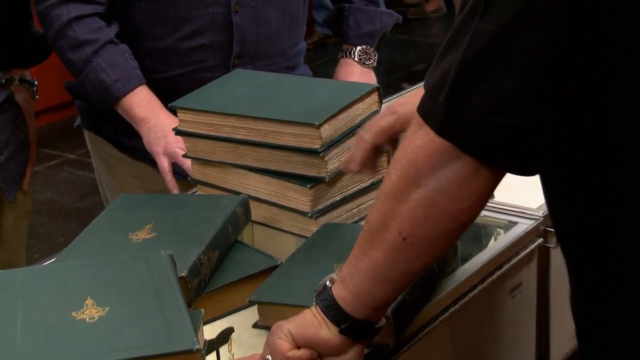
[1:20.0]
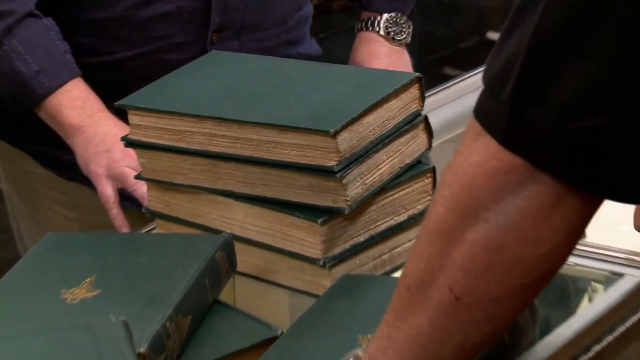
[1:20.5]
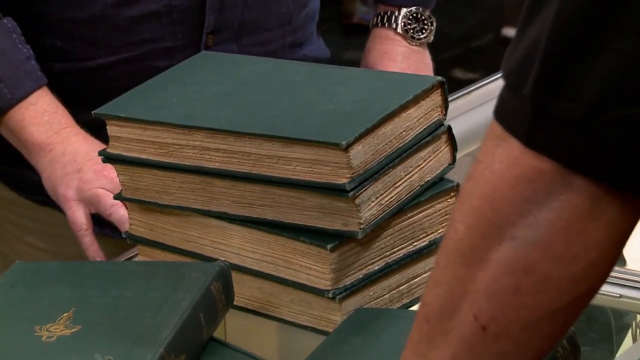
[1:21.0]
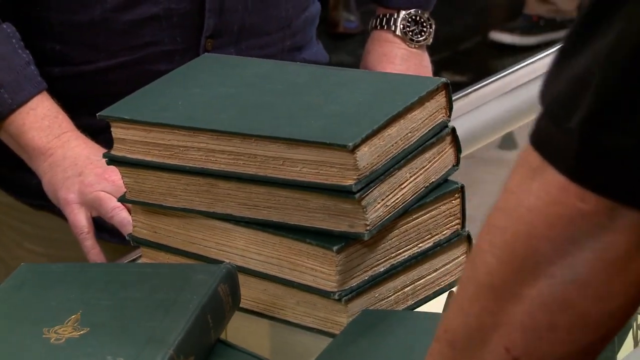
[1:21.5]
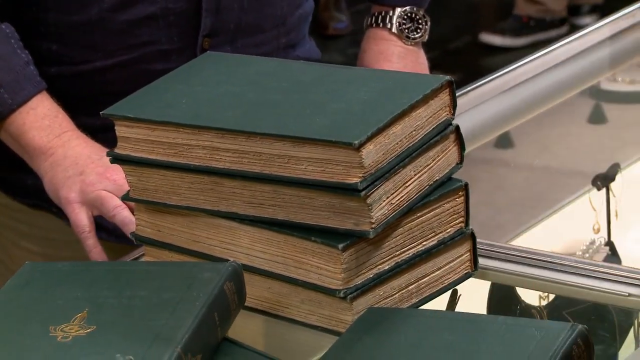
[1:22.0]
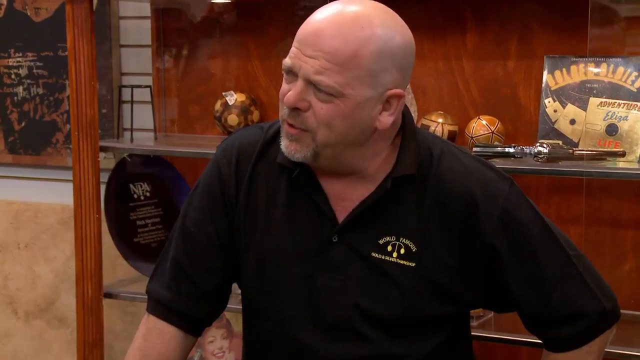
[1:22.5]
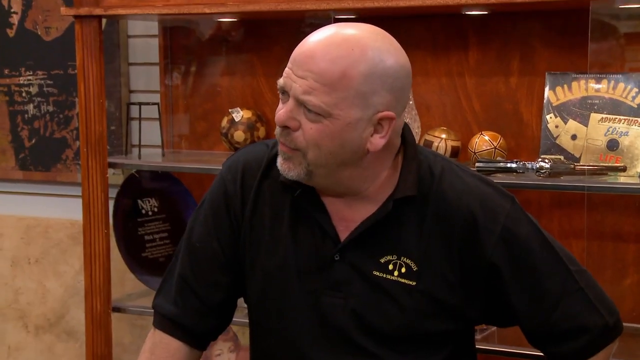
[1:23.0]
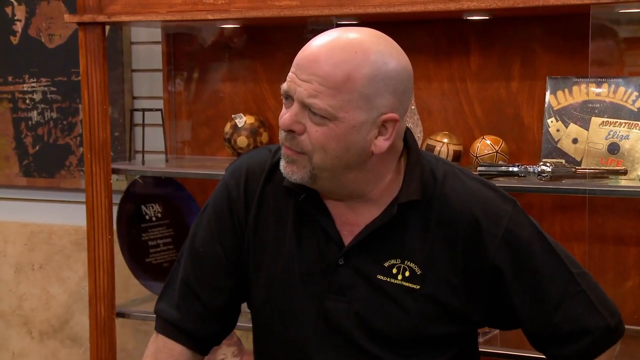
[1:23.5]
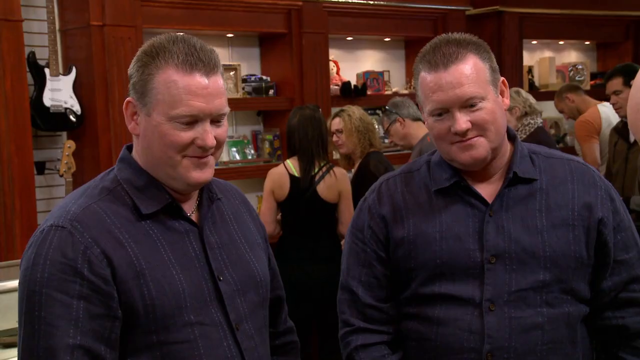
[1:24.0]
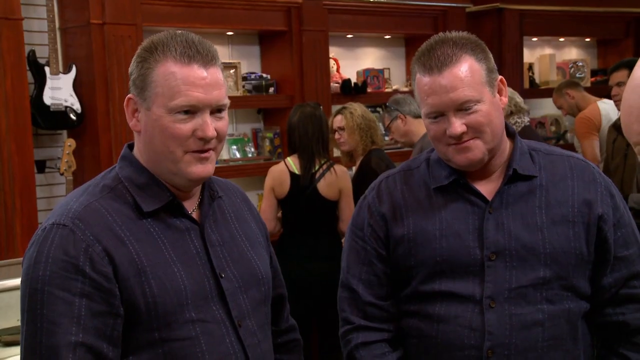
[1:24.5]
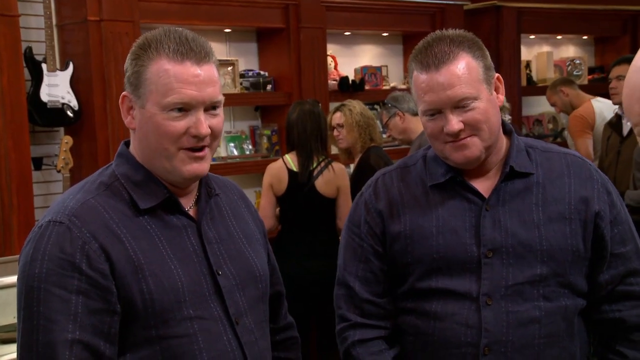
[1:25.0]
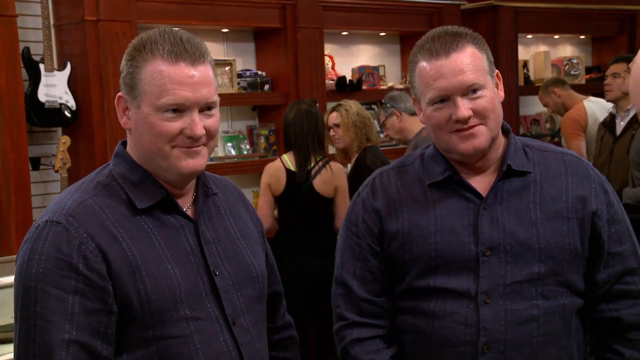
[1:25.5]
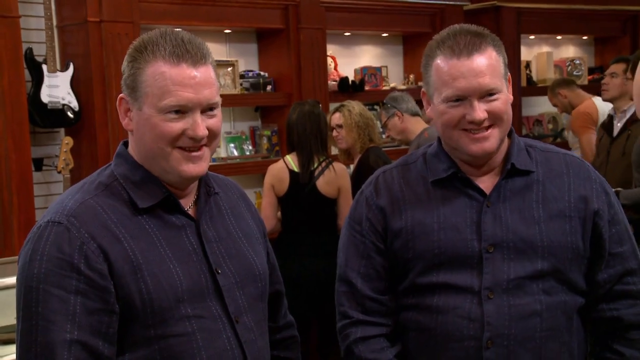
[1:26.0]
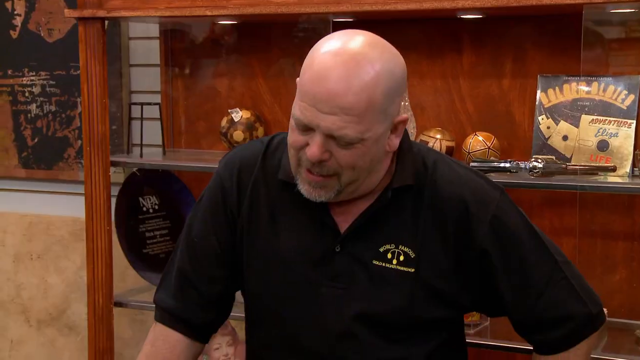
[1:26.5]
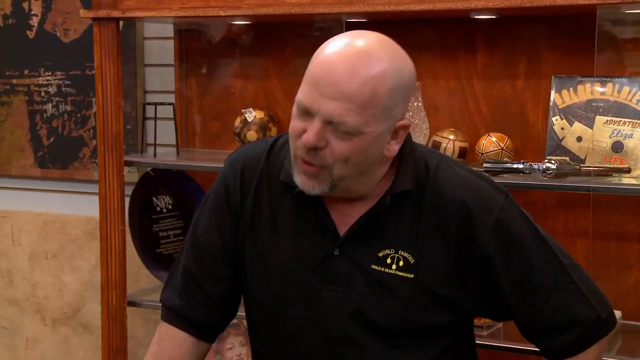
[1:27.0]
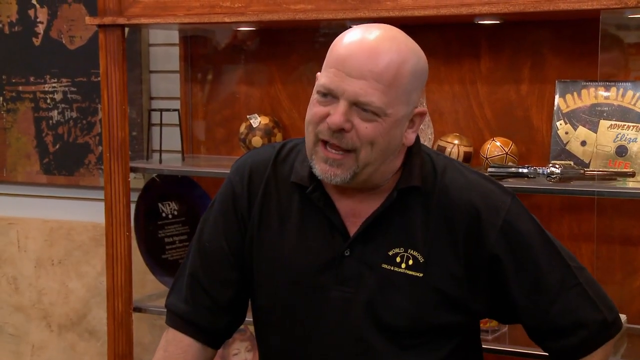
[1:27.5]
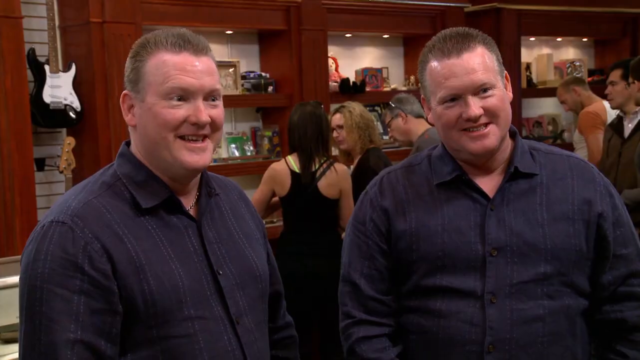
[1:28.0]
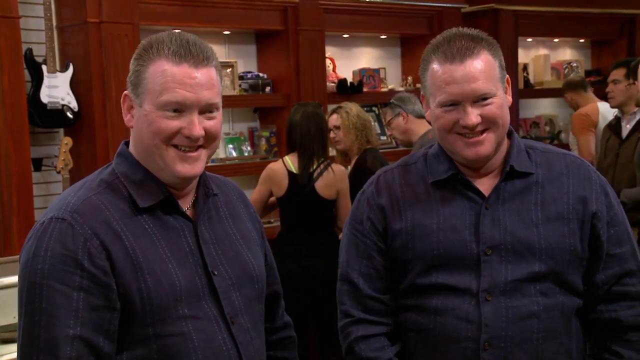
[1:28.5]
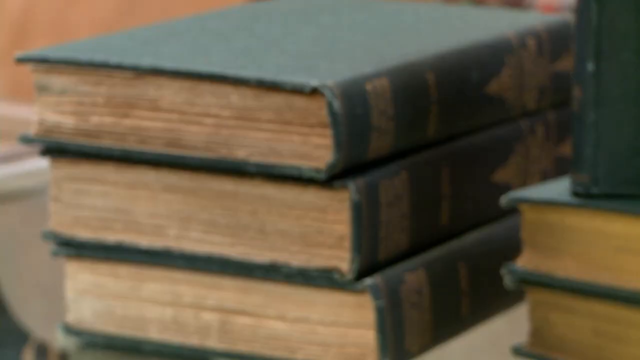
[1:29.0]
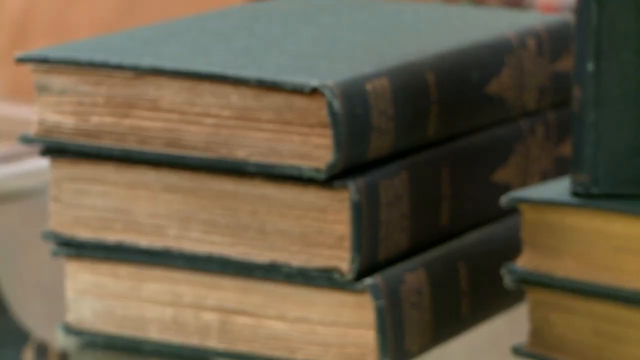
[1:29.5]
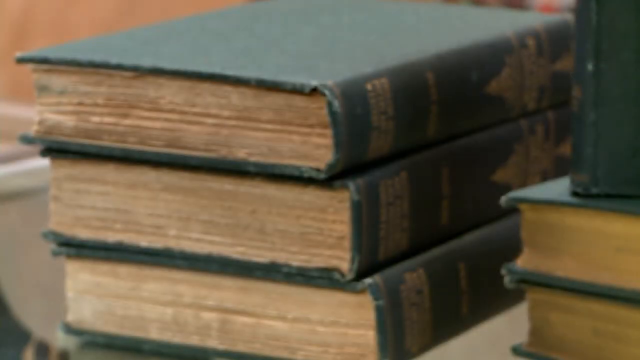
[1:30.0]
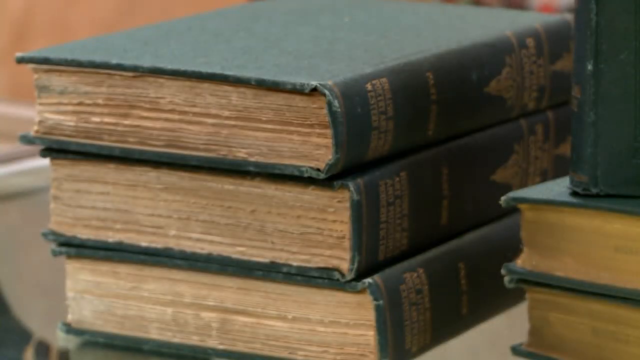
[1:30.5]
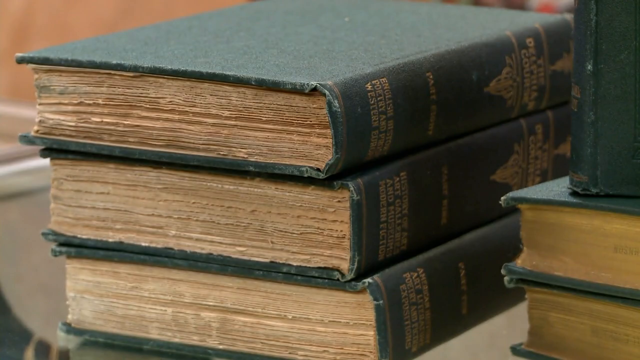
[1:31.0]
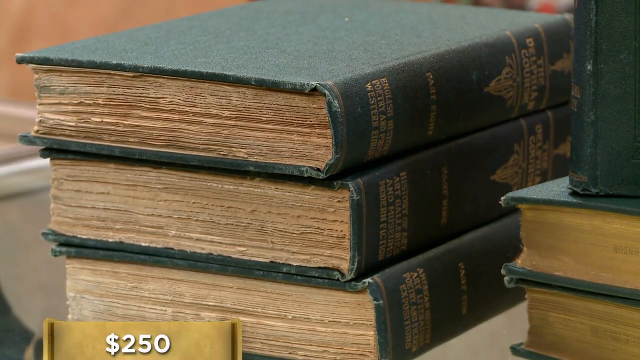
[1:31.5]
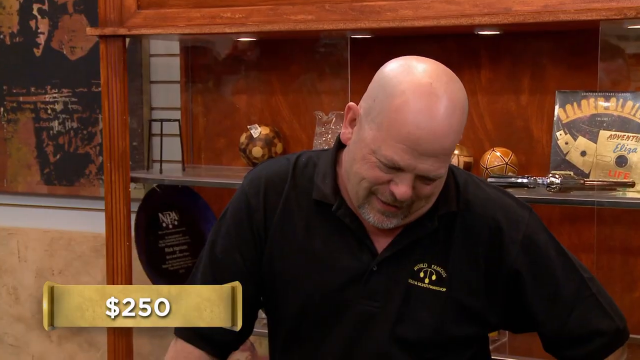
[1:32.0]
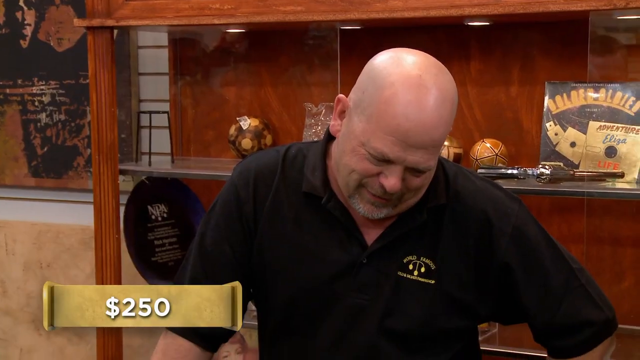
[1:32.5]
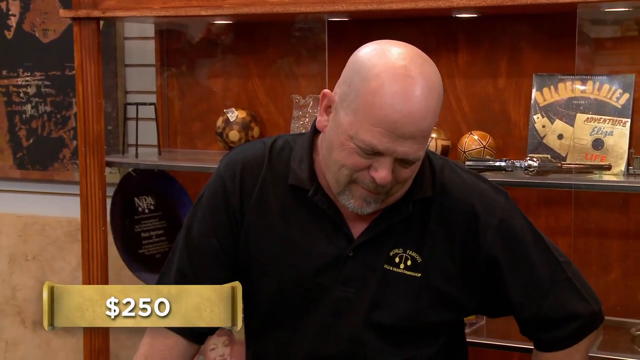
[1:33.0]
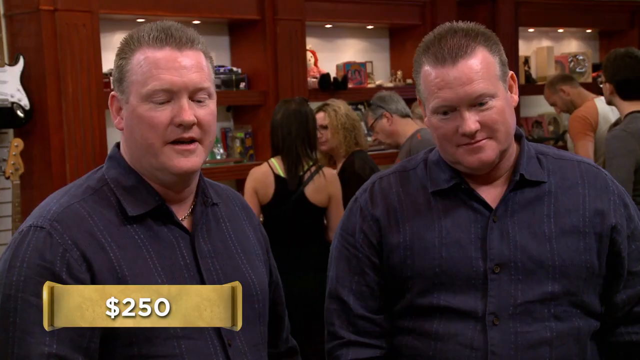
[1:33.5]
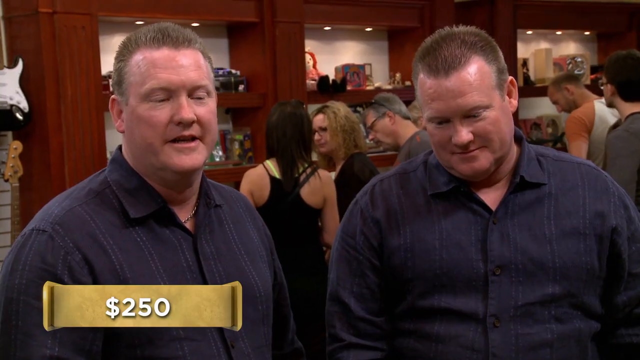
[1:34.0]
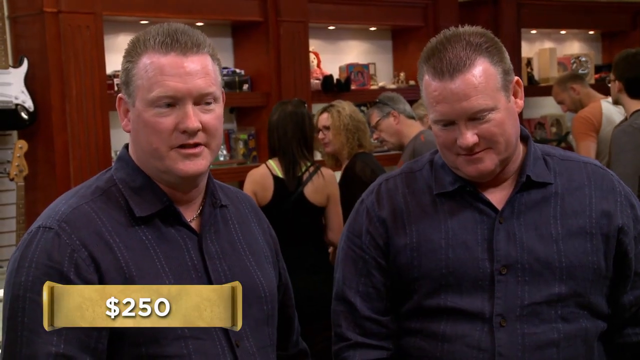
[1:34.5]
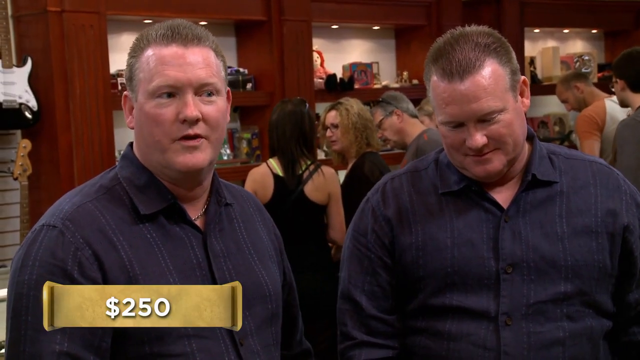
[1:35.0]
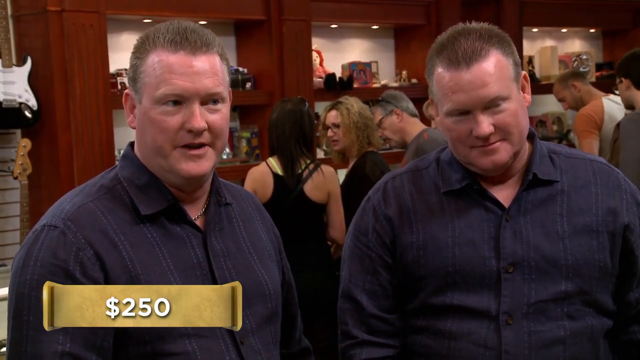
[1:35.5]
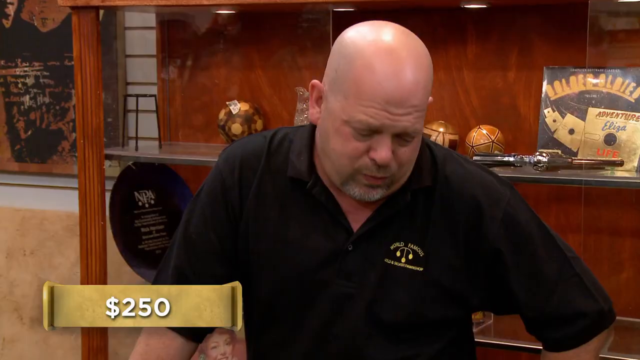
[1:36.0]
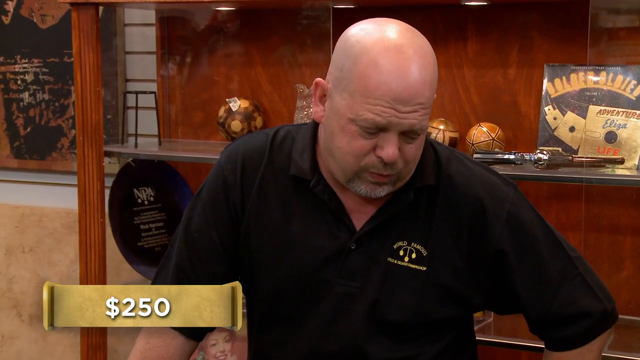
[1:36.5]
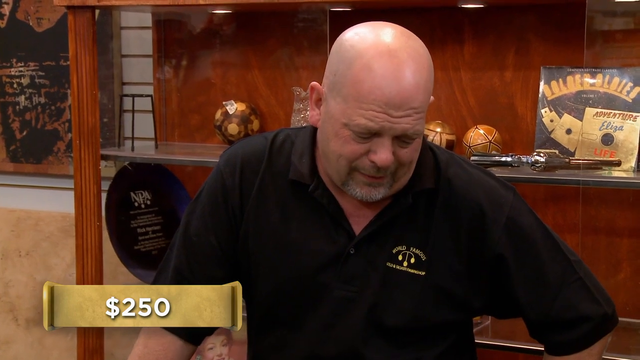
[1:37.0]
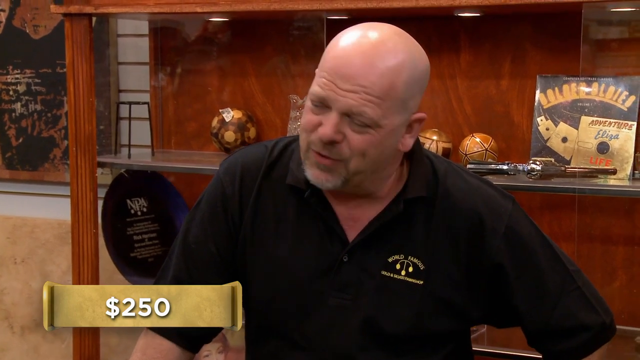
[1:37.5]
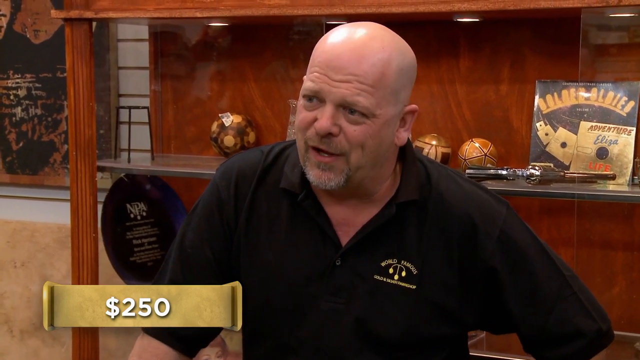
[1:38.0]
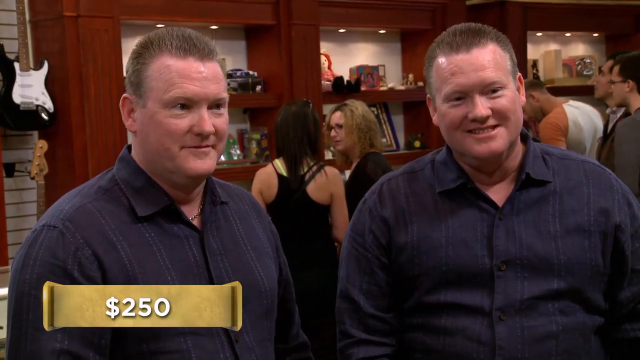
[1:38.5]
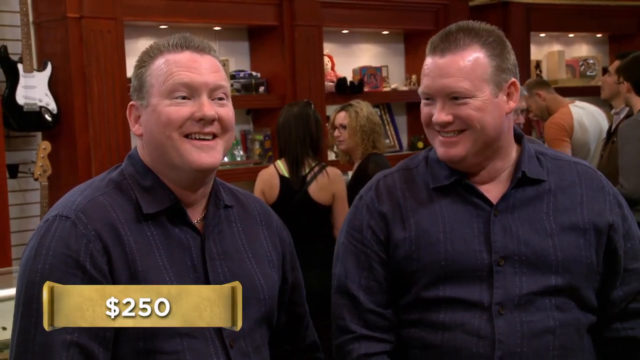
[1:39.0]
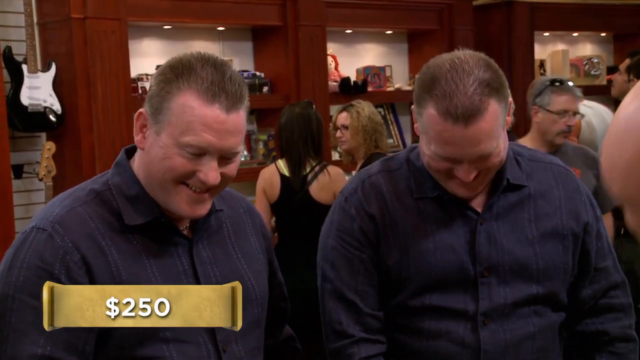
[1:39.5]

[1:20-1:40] Close-ups show the books on the counter as the bald man in the short black shirt keeps talking about them to Derek and Eric, who keep laughing. Many people behind them are looking at them, not at the camera. A big black and white guitar hangs on one of the walls, with another guitar below it, so it is apparently an antique shop. Another close-up shows the Delphian Course books and how many volumes there are, and then a value appears on screen: "$250". Derek and Eric smile and appear happy.